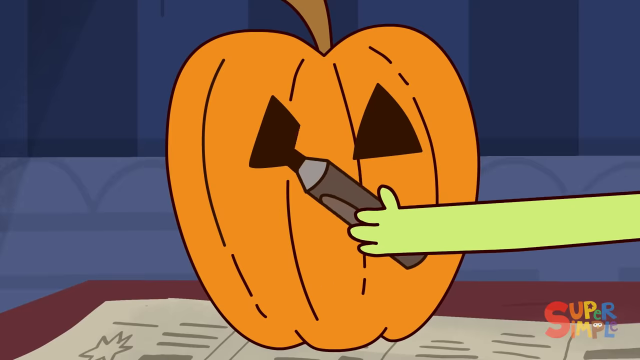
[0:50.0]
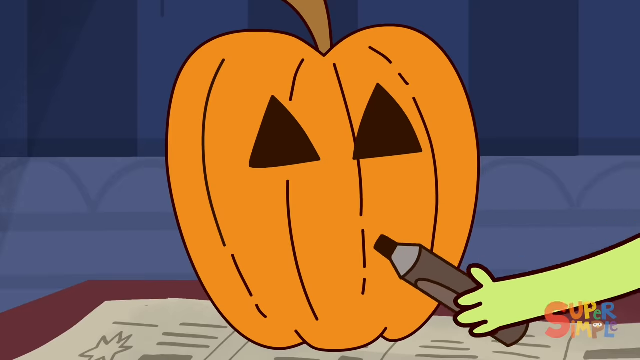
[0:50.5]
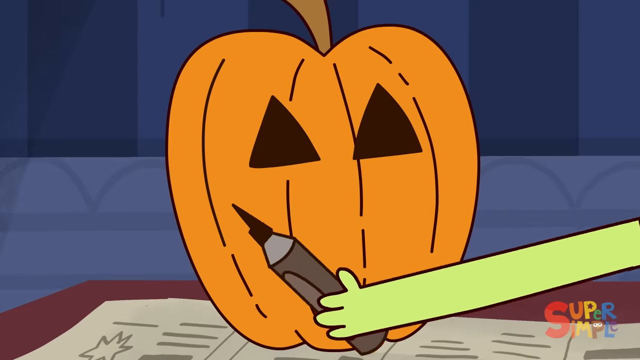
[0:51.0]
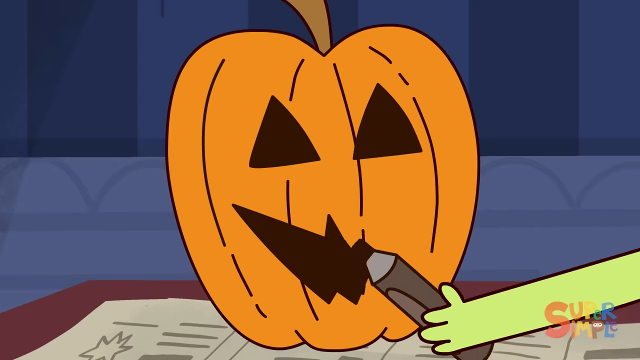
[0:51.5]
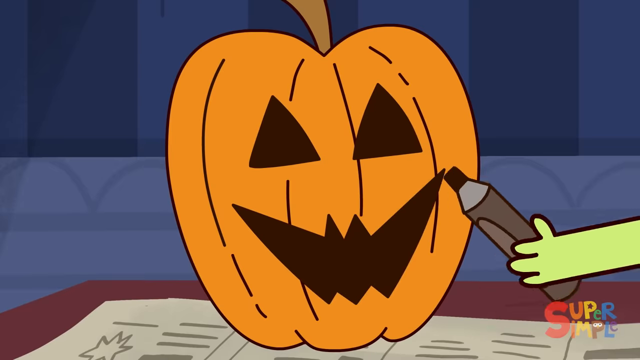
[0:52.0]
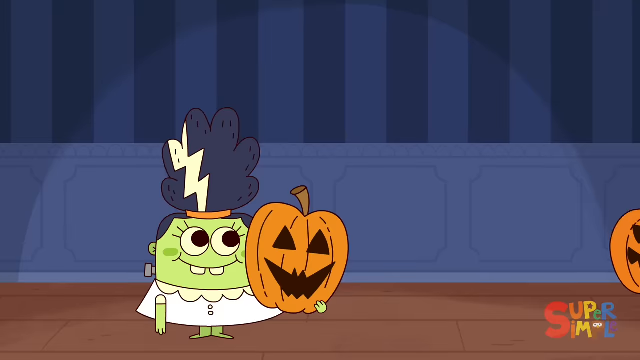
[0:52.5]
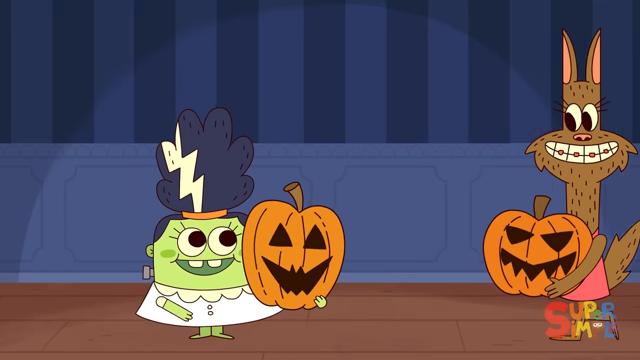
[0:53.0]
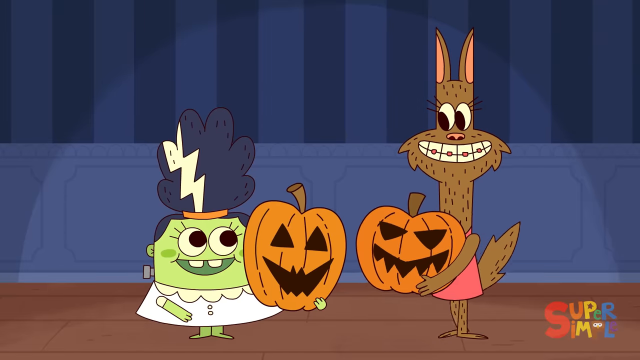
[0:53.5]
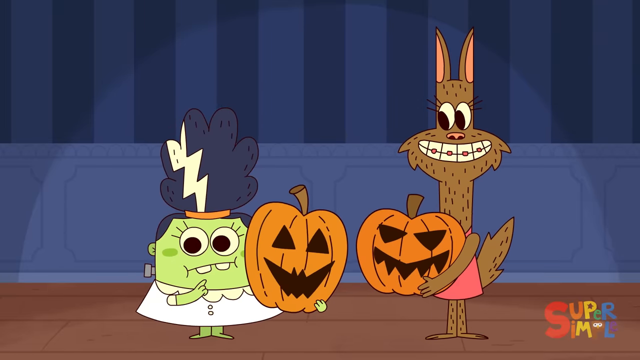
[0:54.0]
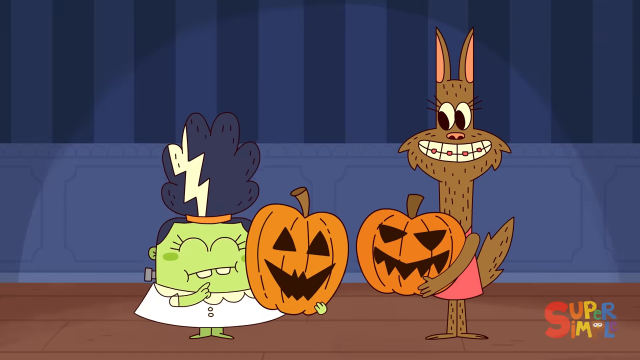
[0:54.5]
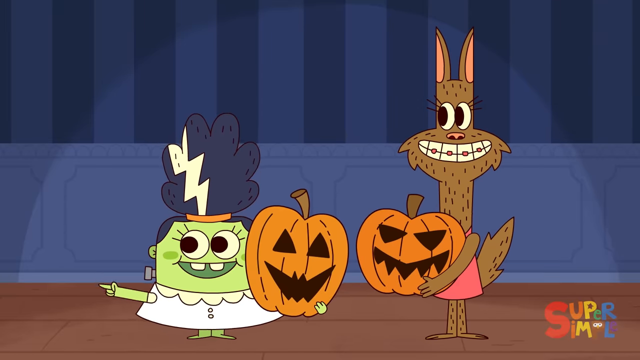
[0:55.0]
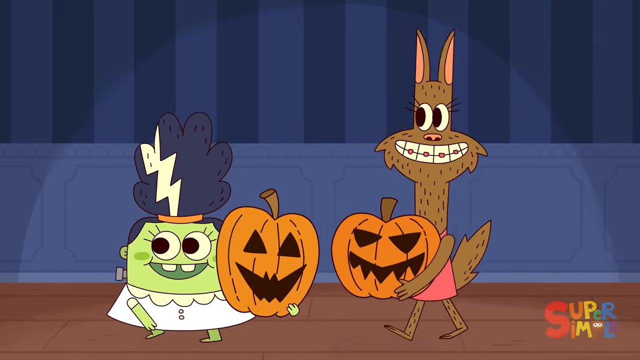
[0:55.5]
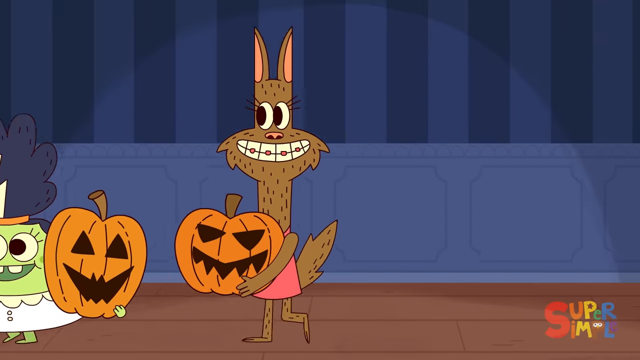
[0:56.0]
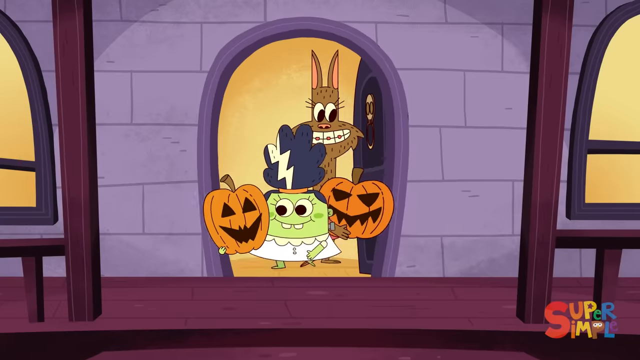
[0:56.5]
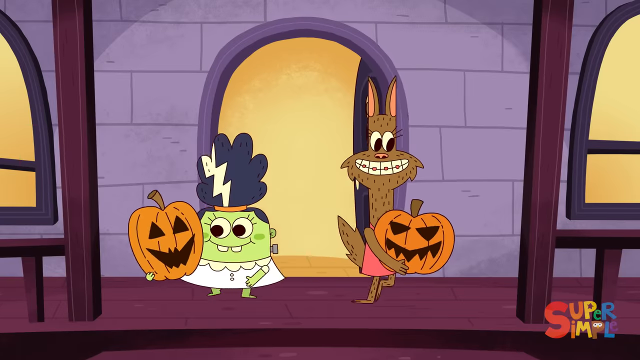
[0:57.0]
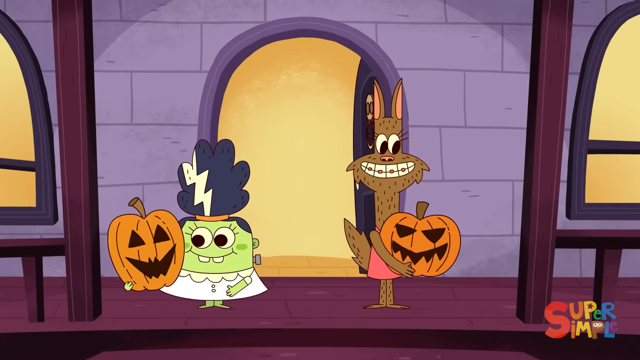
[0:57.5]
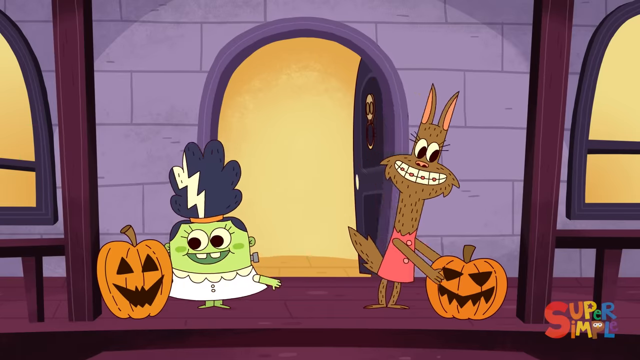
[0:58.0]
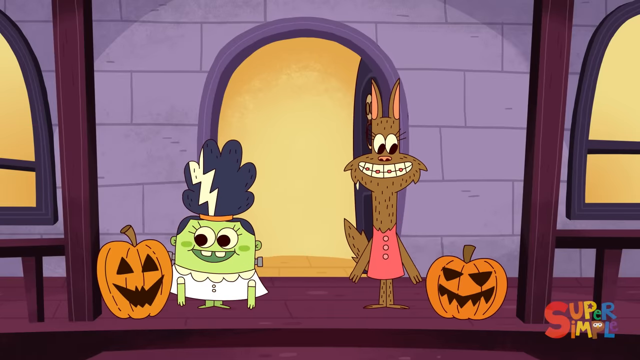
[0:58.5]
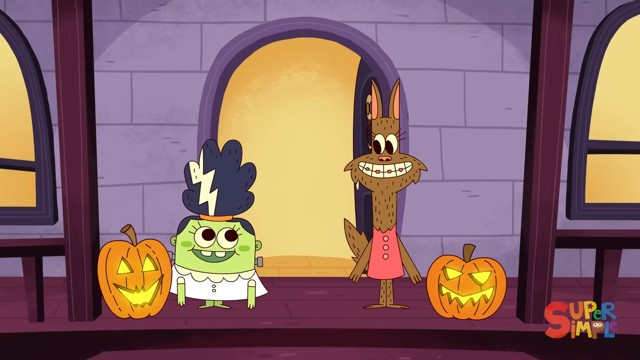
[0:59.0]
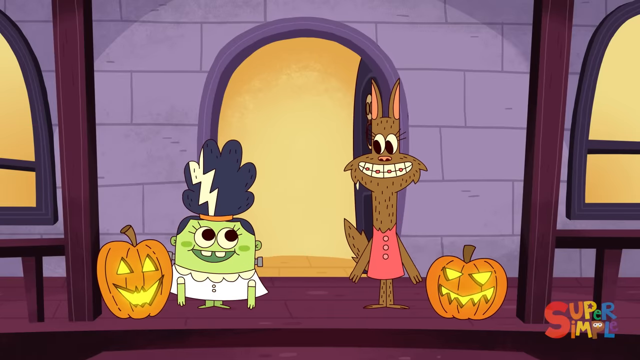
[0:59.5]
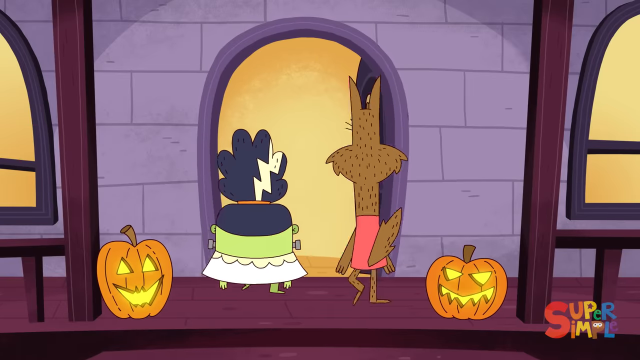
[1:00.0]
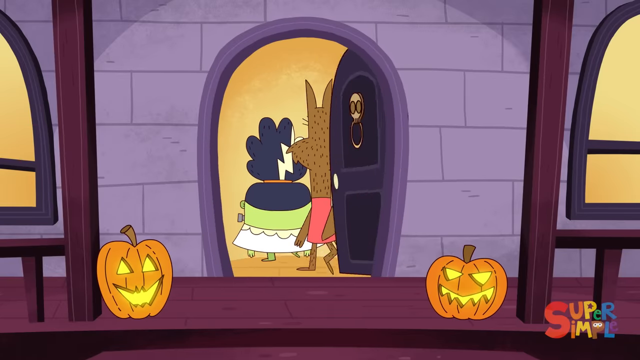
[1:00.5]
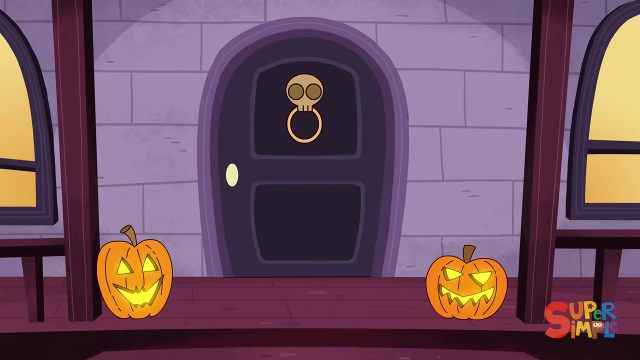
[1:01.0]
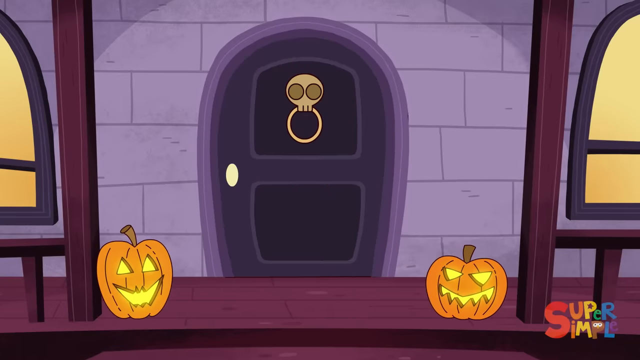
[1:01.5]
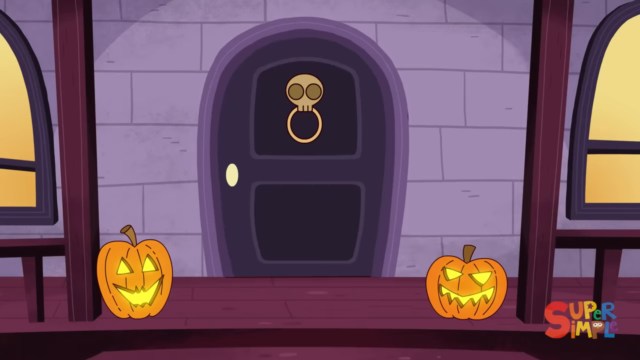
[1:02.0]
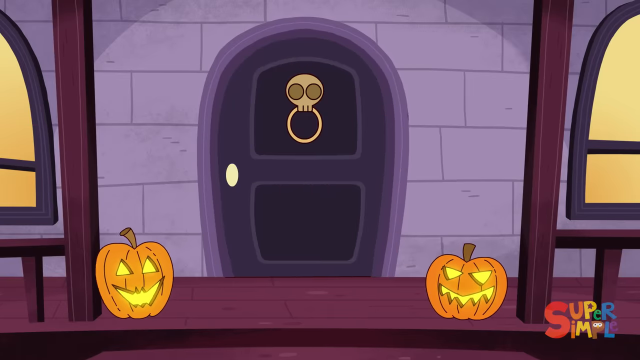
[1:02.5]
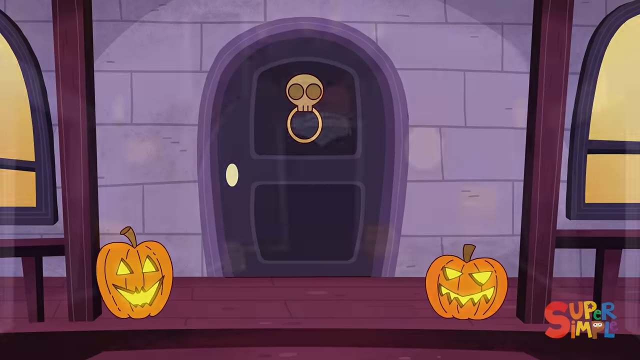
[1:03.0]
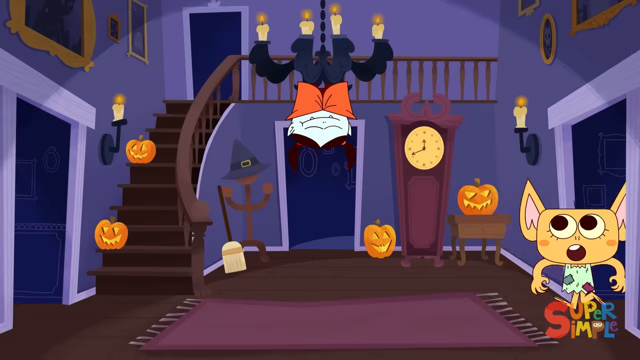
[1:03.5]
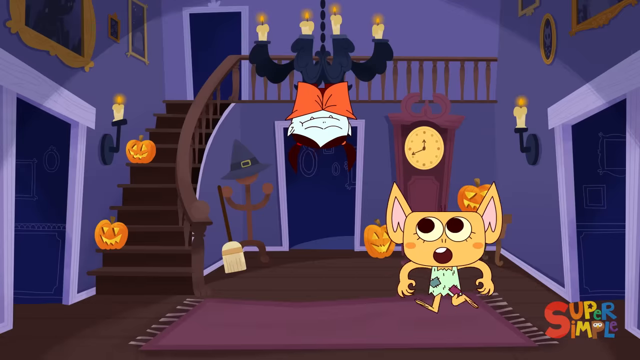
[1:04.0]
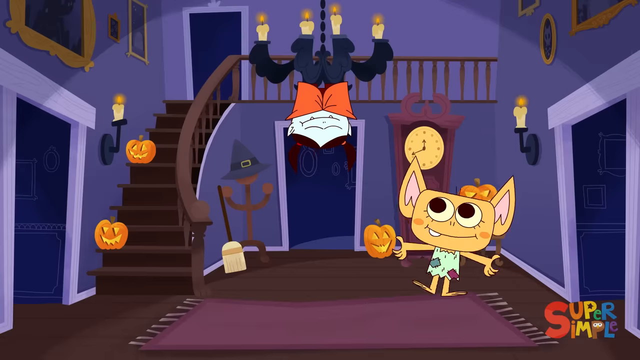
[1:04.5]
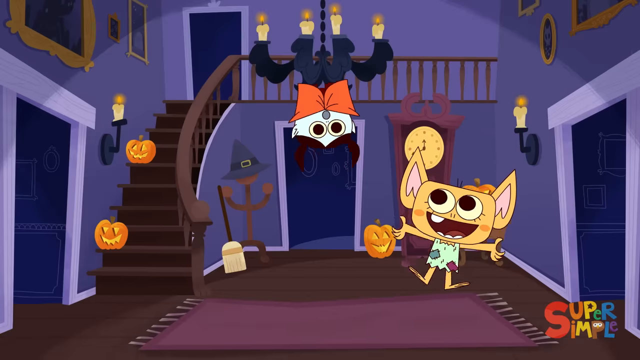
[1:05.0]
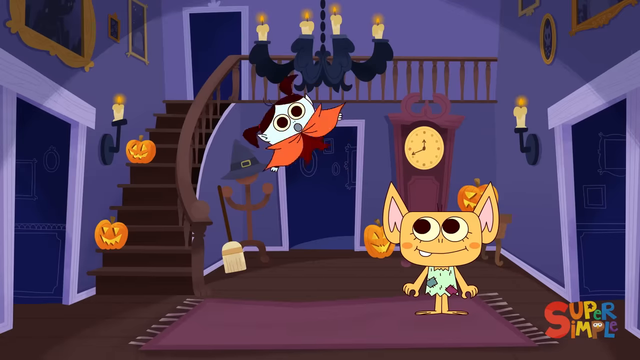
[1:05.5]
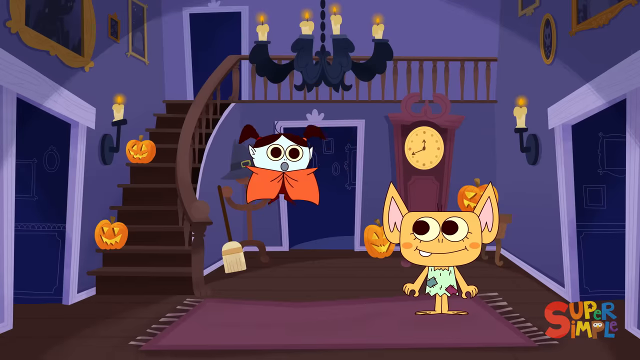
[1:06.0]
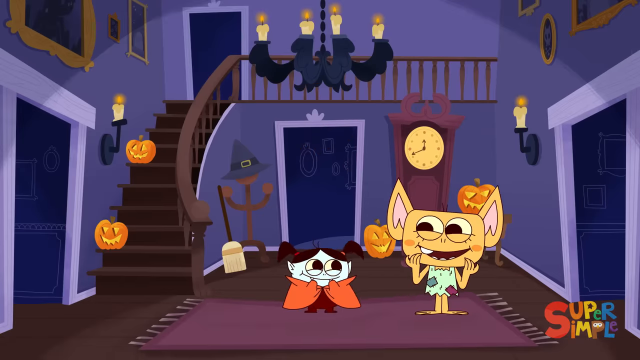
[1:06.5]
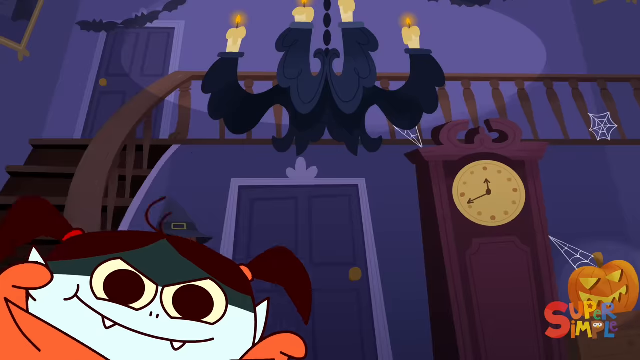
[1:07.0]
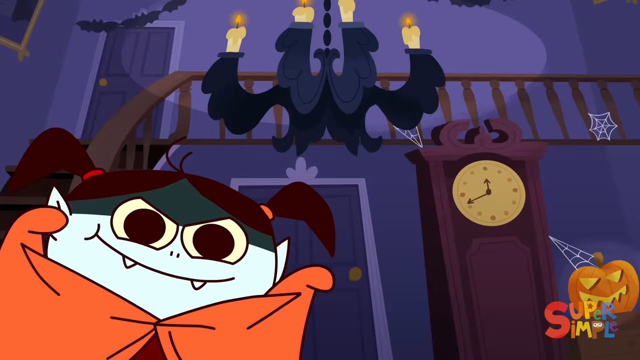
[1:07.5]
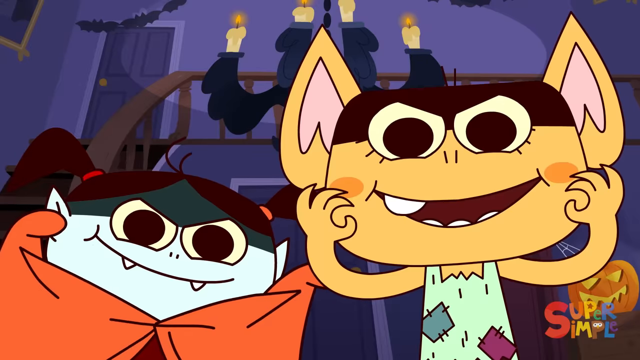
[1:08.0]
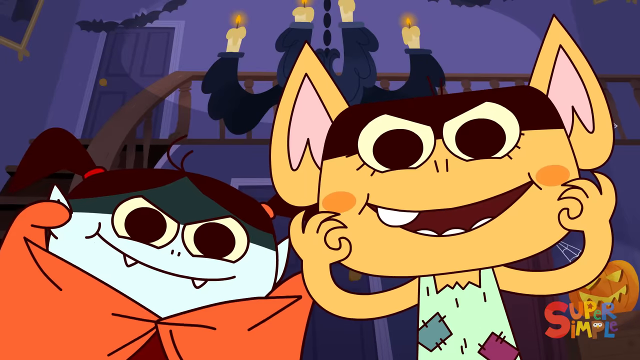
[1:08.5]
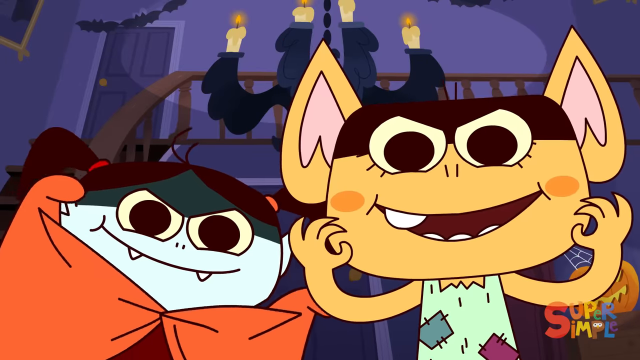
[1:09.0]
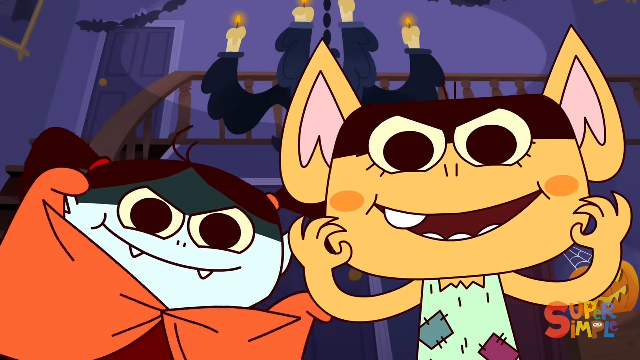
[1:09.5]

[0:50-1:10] The camera zooms in on a pumpkin having facial features drawn on it. Suddenly the facial features seem to animate and cut out, with a light appearing behind them. The pumpkins are being carried by a Frankenstein monster on the left and a werewolf-ish looking creature on the right. They point to the porch and put the pumpkins down, where the pumpkins do a little animation as if coming to life. The two close the door and go back inside. A little bat-looking creature looks up at the chandelier in the main room and sees a vampire hanging upside down at the top, and the two share a little moment over hanging upside down. They then make spooky motions toward the camera, very close, looking kind of backlit in classic campfire horror-story lighting.